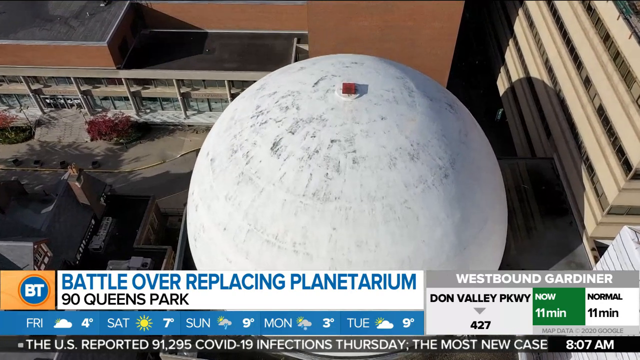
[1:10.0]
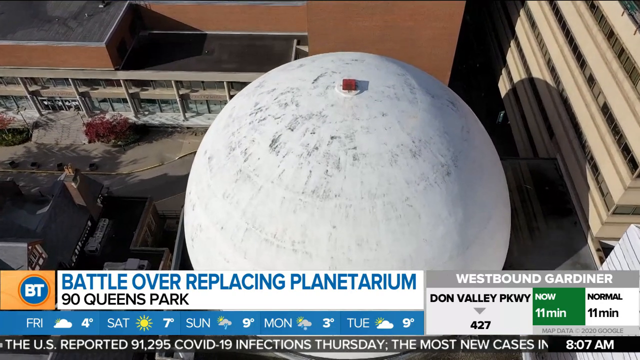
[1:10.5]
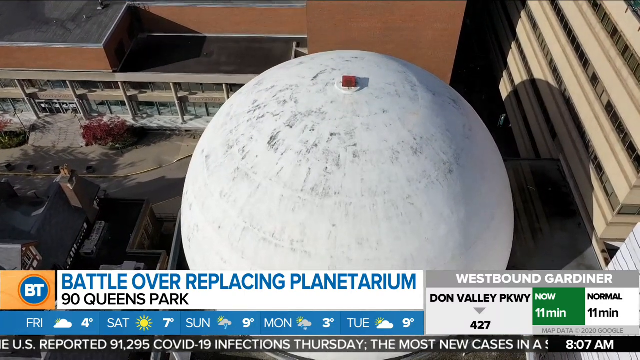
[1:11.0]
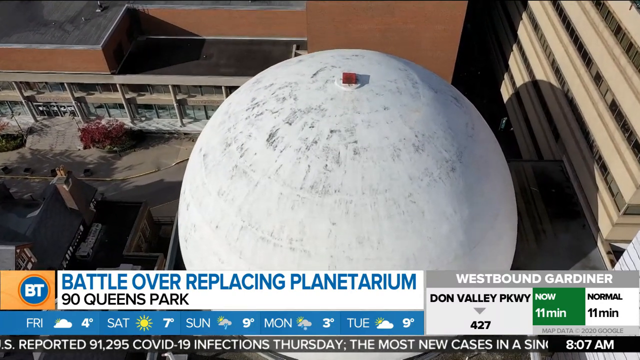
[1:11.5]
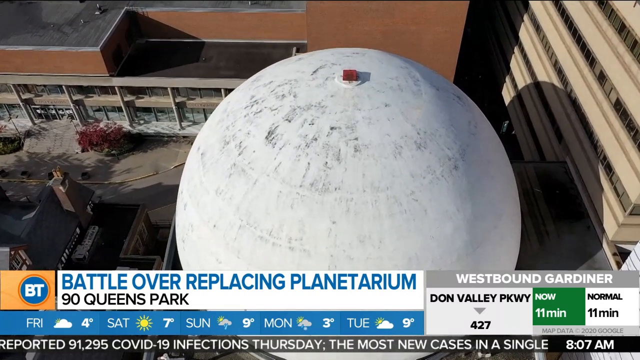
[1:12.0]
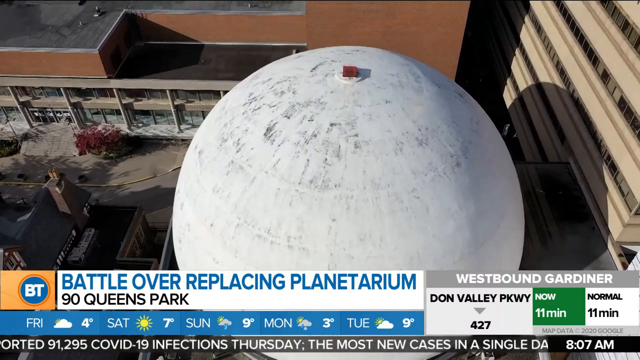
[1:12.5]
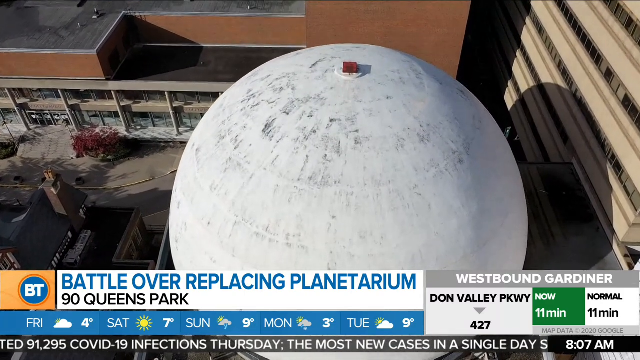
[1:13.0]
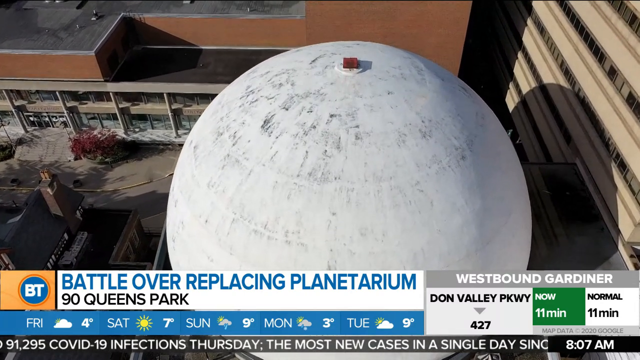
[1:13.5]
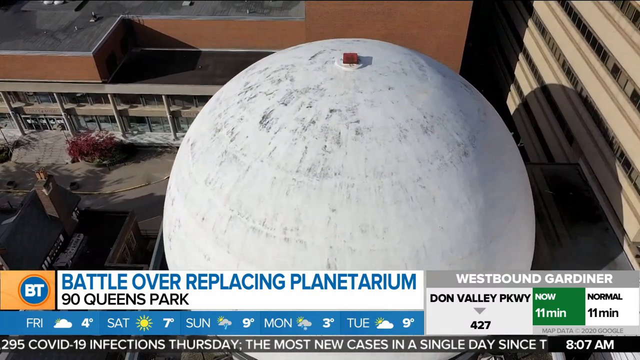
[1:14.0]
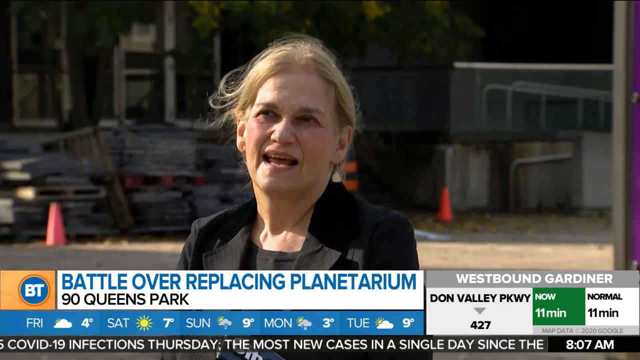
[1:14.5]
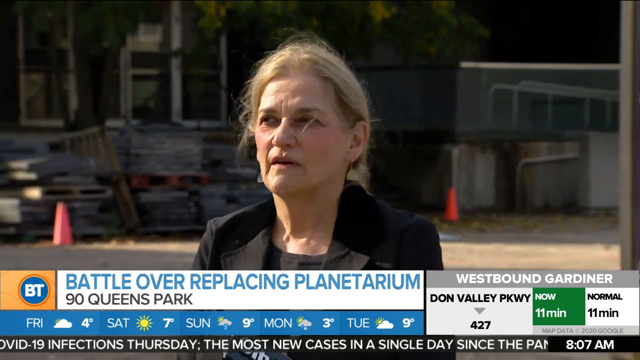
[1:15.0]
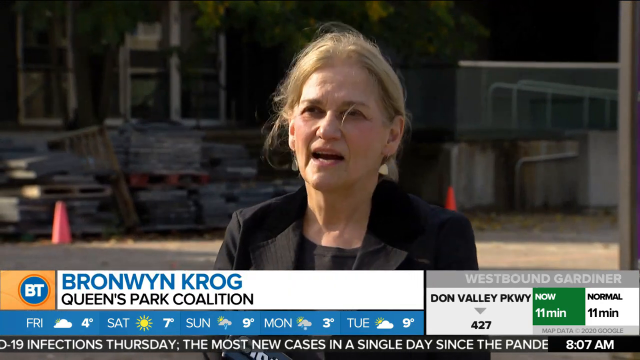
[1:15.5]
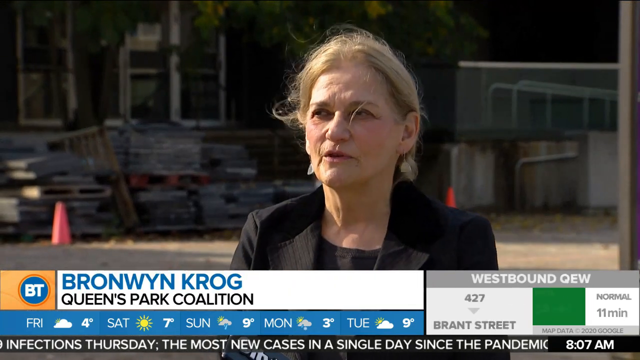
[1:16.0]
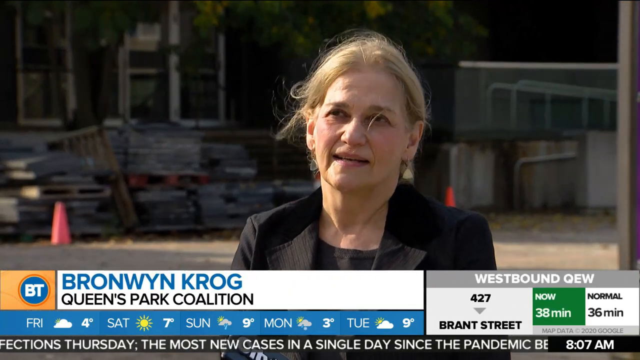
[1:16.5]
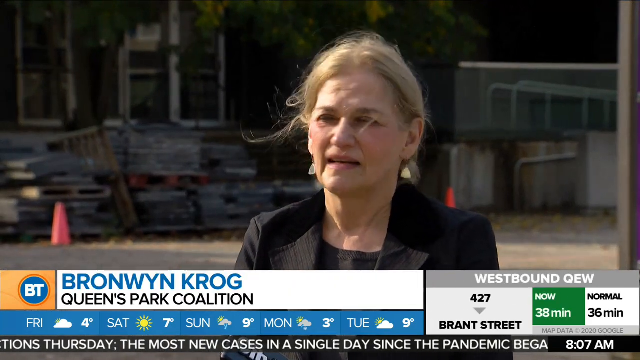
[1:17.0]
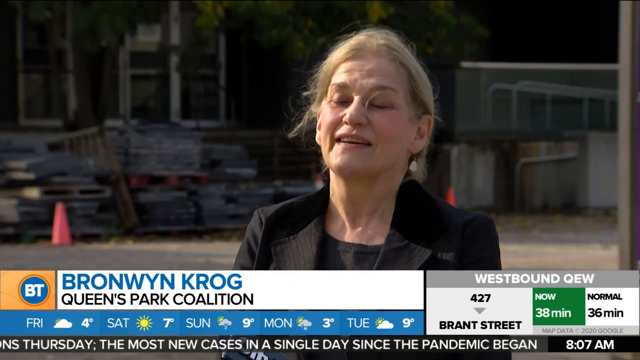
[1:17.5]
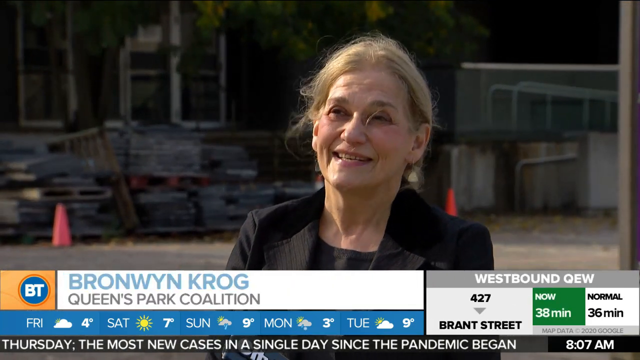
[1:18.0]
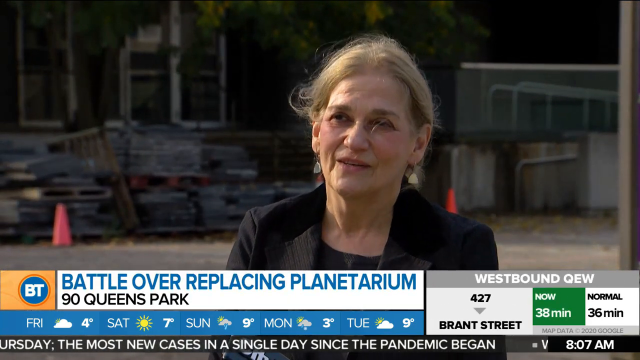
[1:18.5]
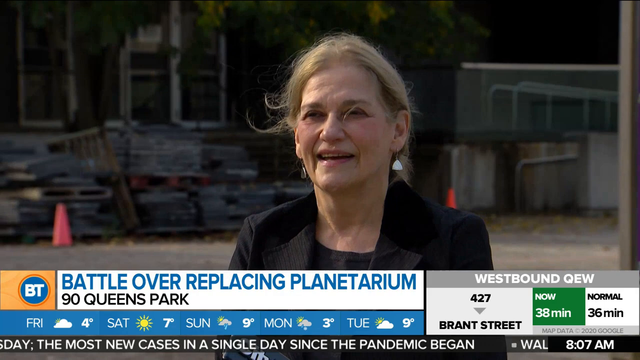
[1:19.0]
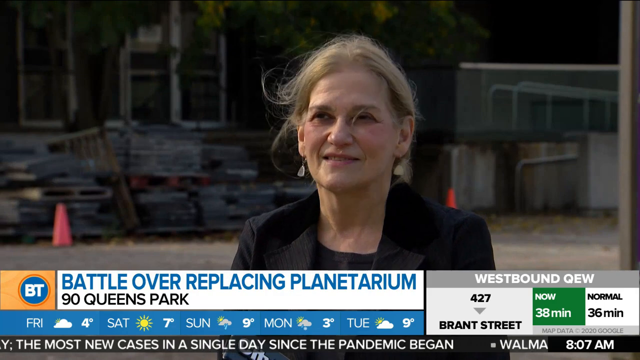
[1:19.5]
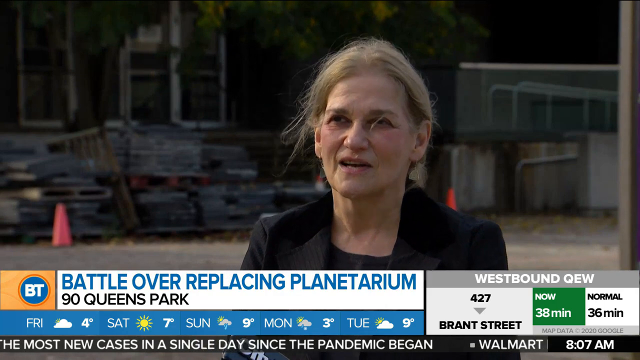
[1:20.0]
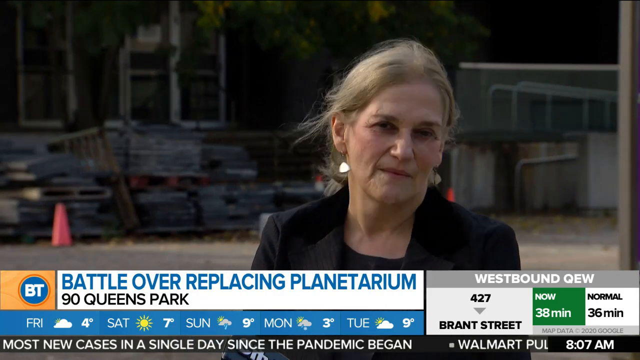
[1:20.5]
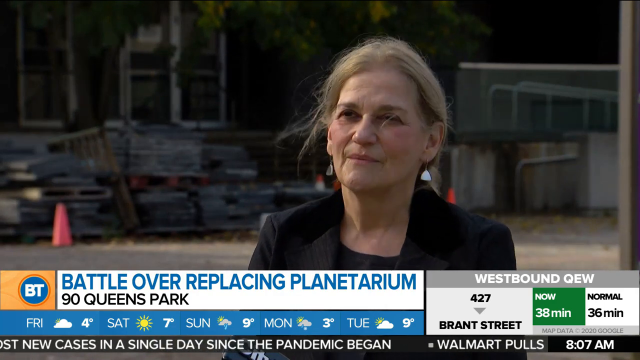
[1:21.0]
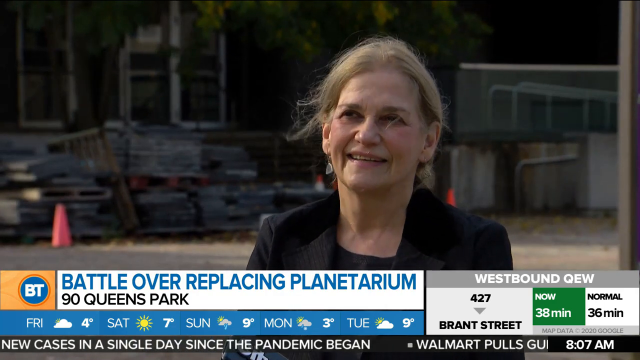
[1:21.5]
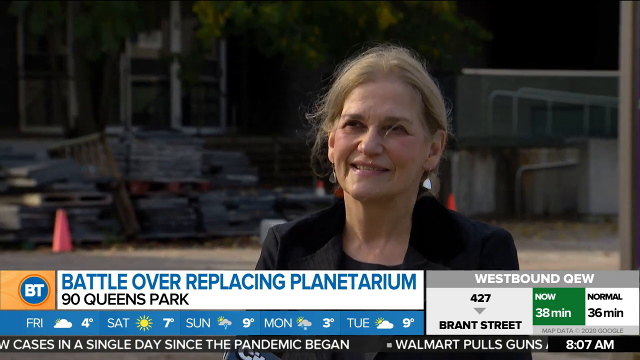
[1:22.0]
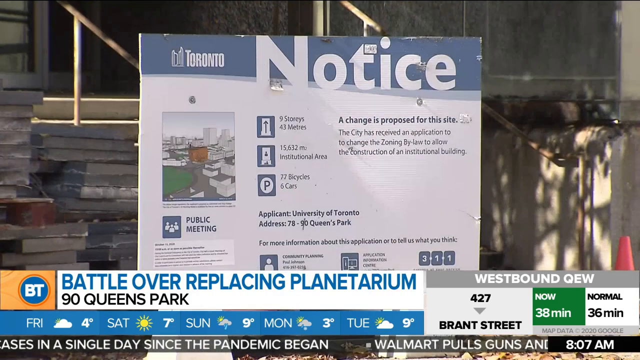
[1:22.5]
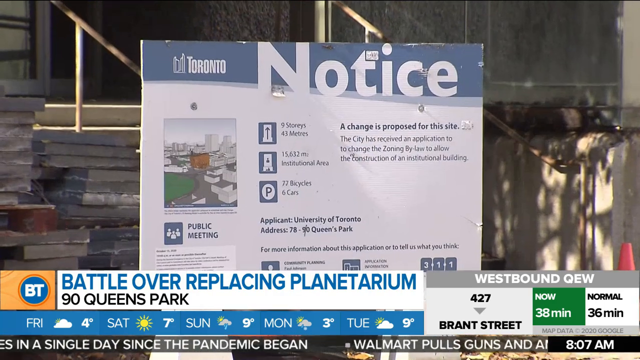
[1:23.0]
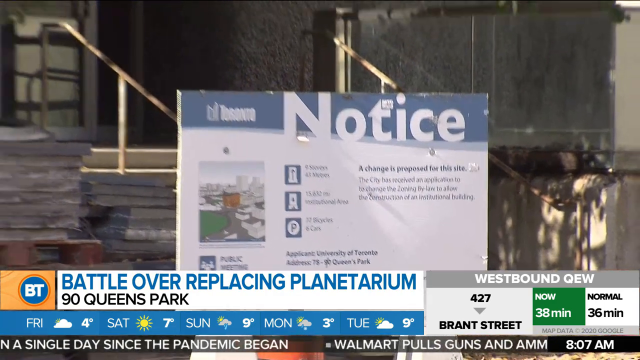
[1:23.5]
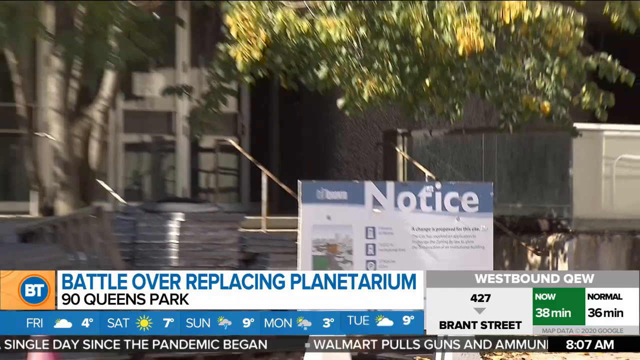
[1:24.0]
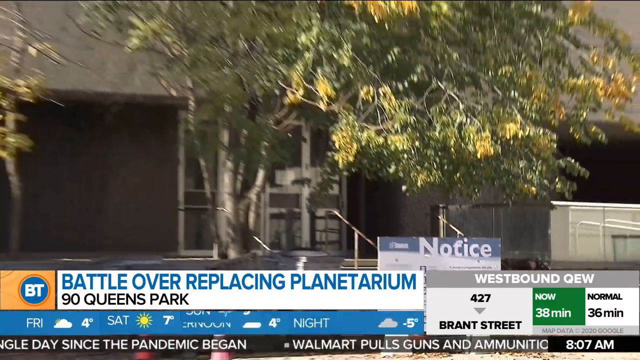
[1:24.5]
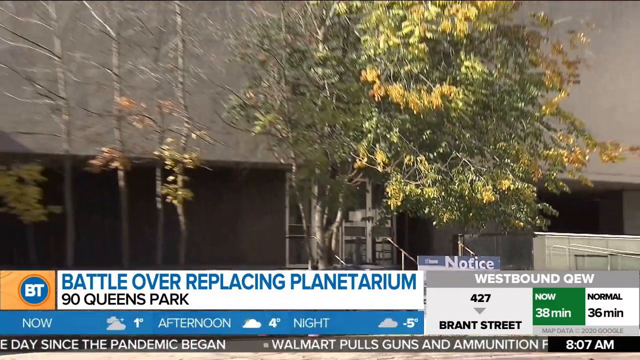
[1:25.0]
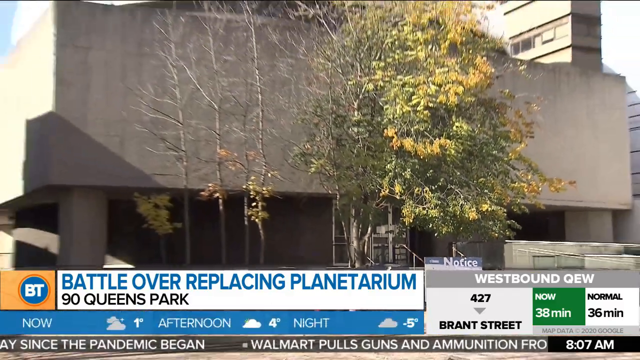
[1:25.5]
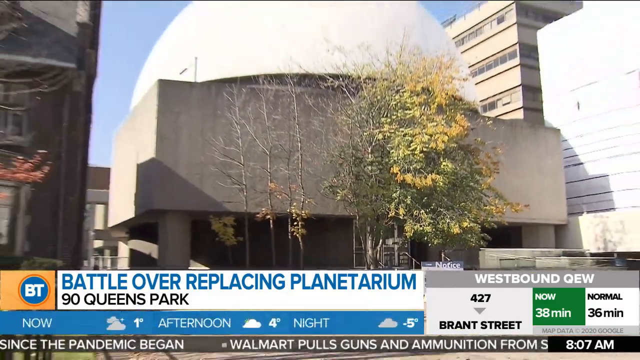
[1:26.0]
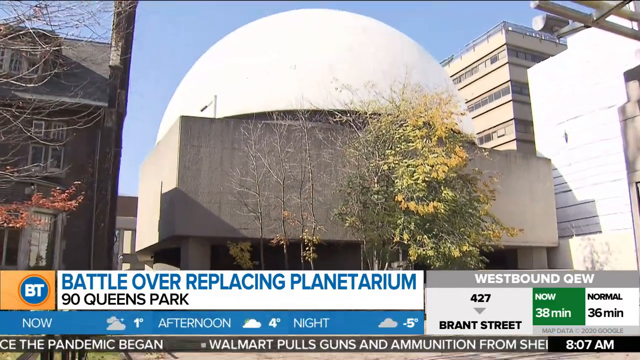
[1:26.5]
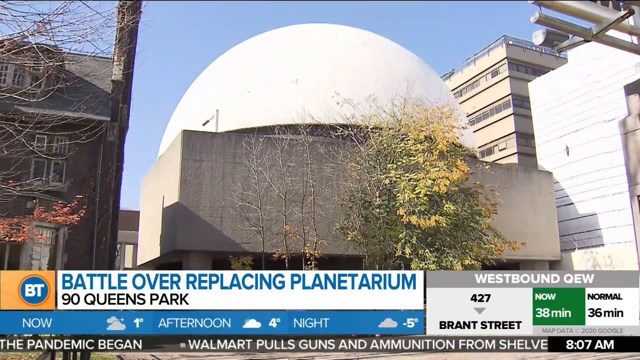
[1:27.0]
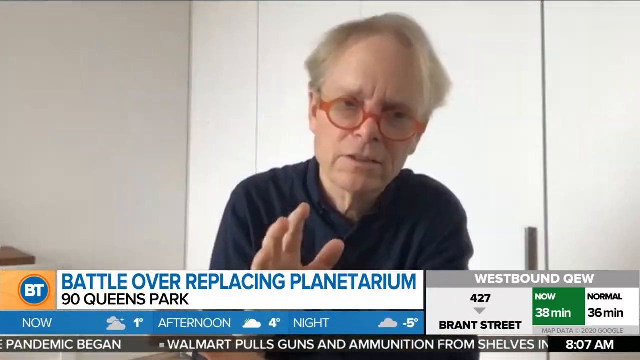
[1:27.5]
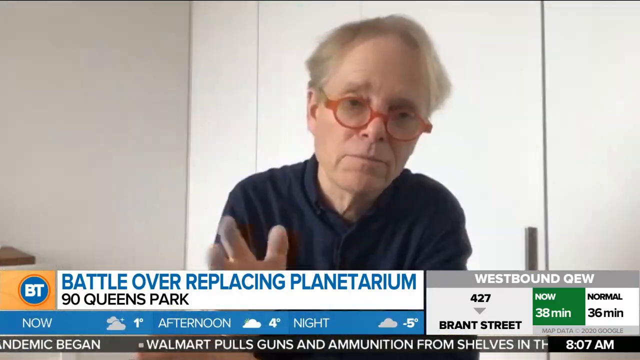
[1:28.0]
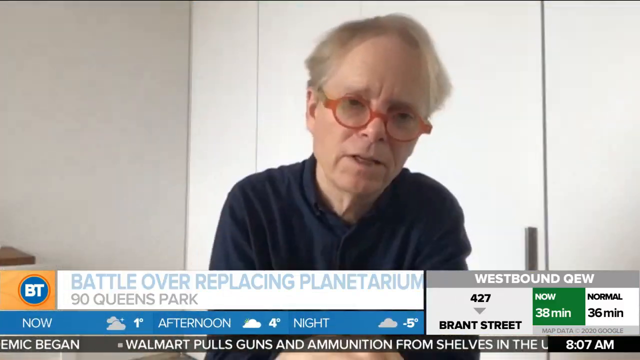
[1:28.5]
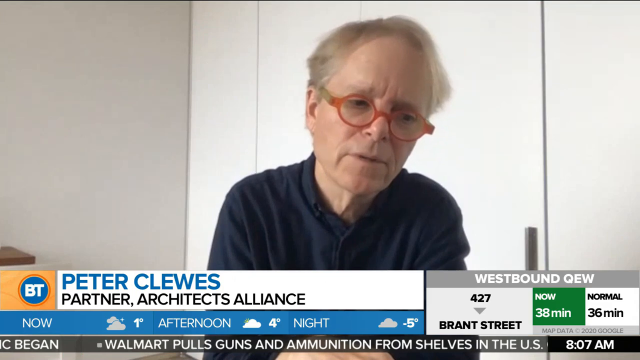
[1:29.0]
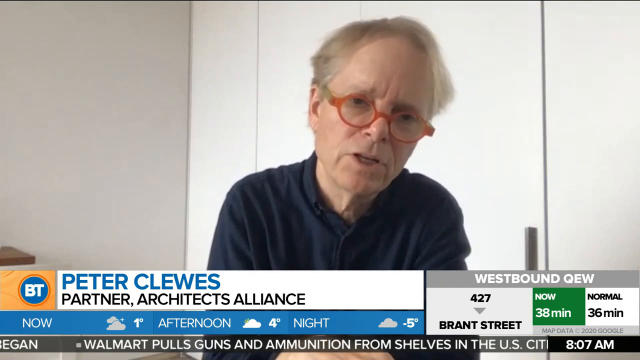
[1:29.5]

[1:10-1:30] Aerial views show the buildings, their tops and the surrounding area. A lady appears on screen giving further explanation. The camera zooms out from the notice, which is very noticeable. An old male analyst is shown on screen giving a brief explanation of what is happening. The headlines change. The scene is outside the building where the written notice is.